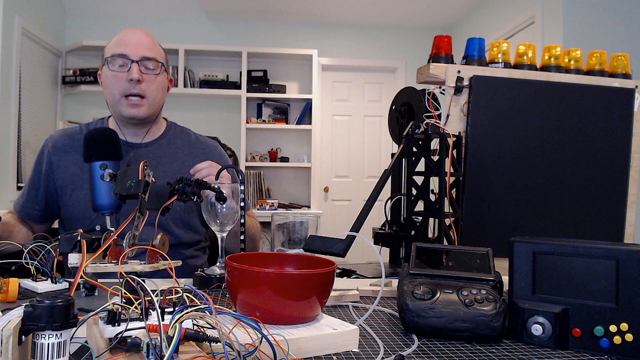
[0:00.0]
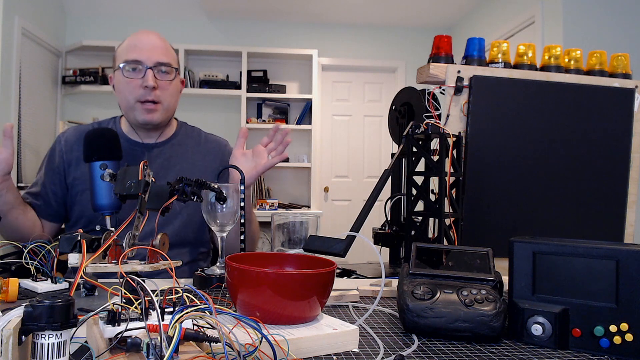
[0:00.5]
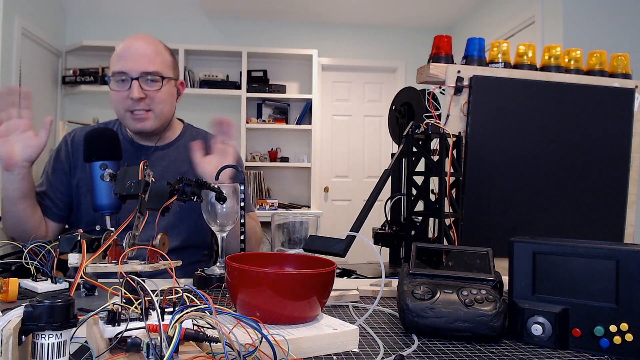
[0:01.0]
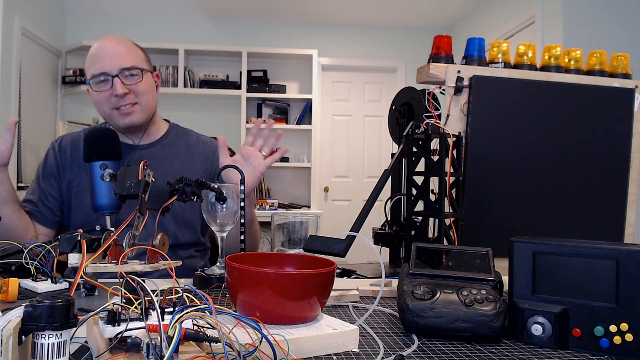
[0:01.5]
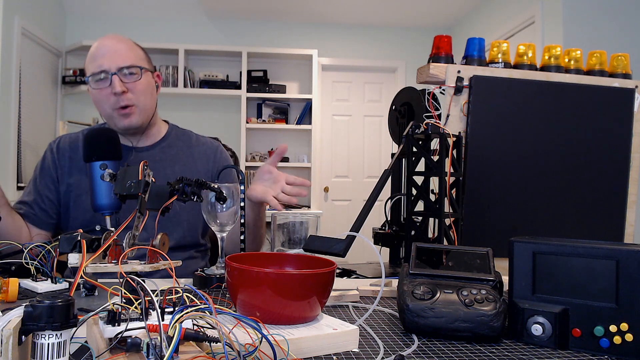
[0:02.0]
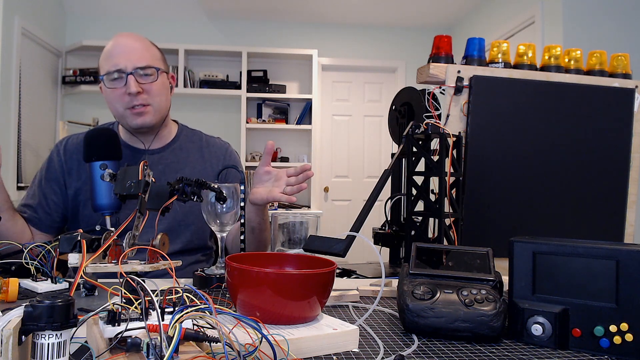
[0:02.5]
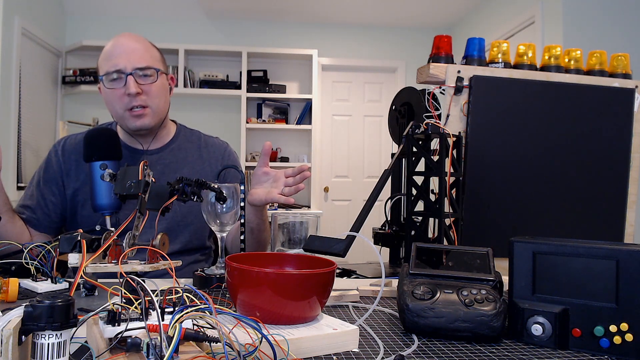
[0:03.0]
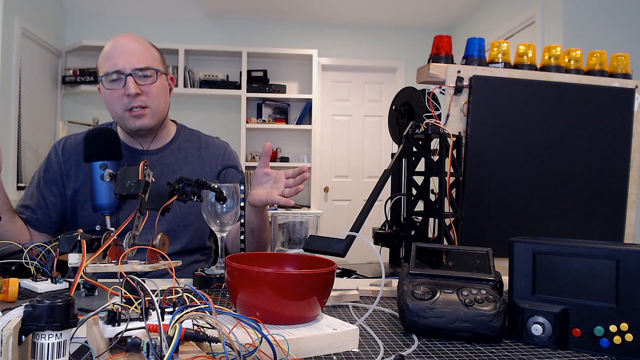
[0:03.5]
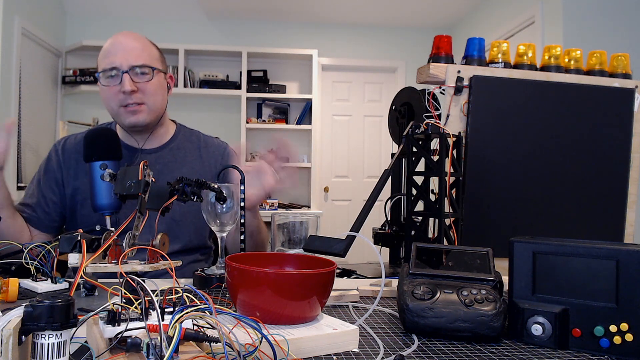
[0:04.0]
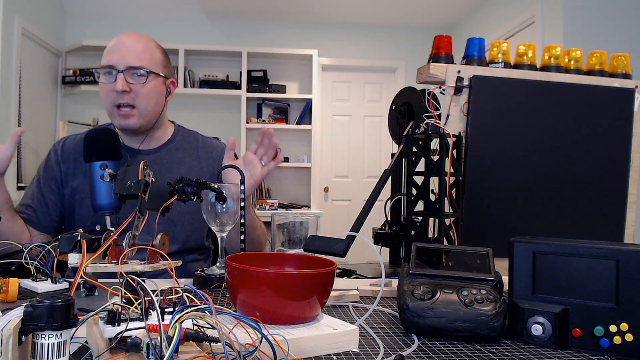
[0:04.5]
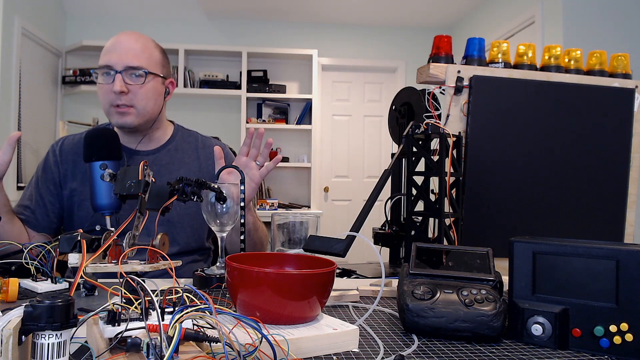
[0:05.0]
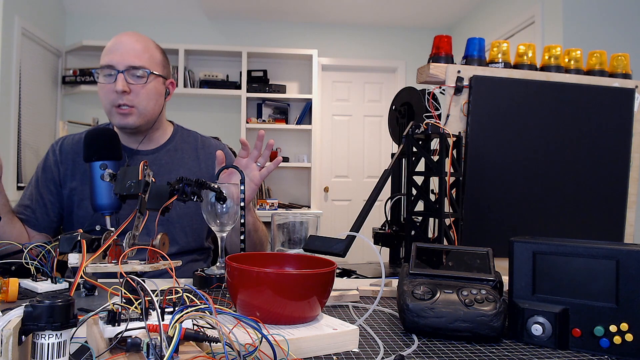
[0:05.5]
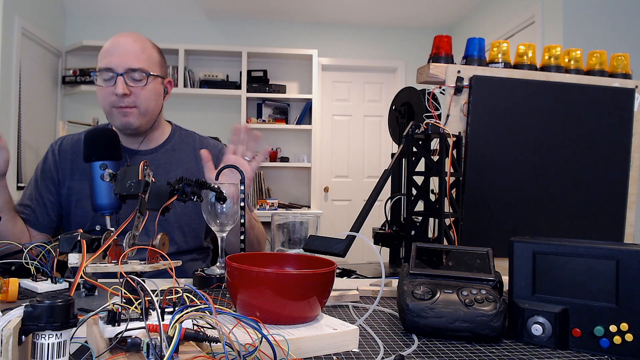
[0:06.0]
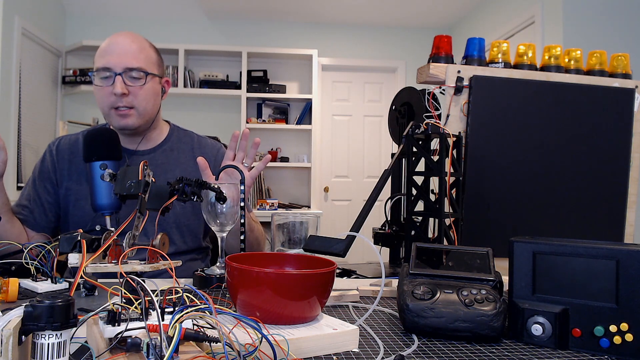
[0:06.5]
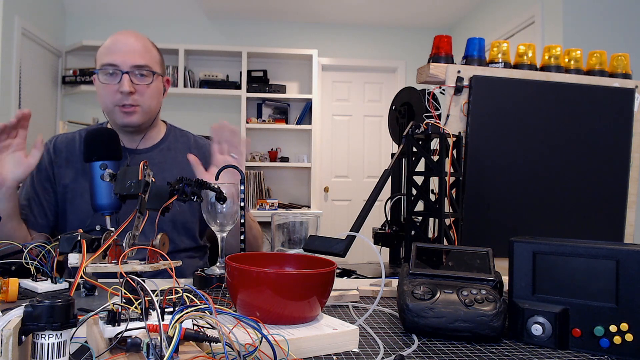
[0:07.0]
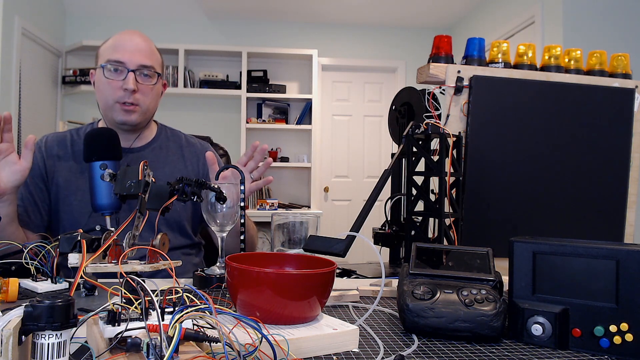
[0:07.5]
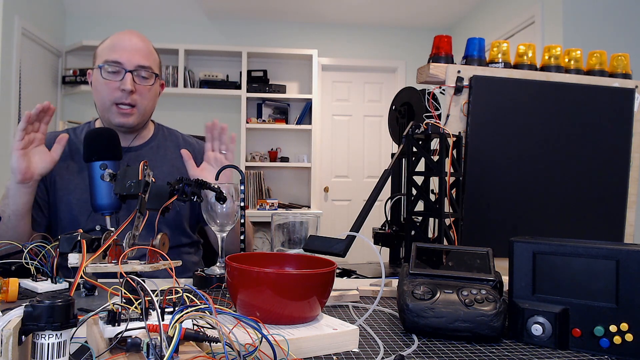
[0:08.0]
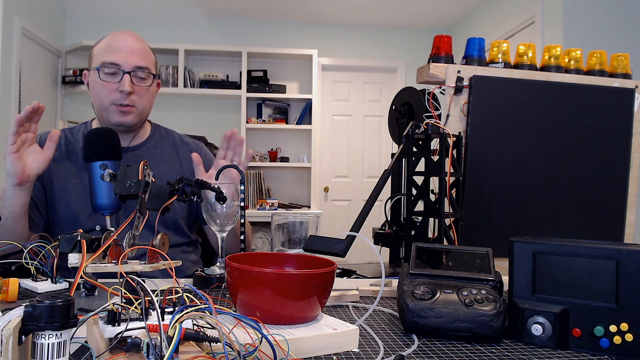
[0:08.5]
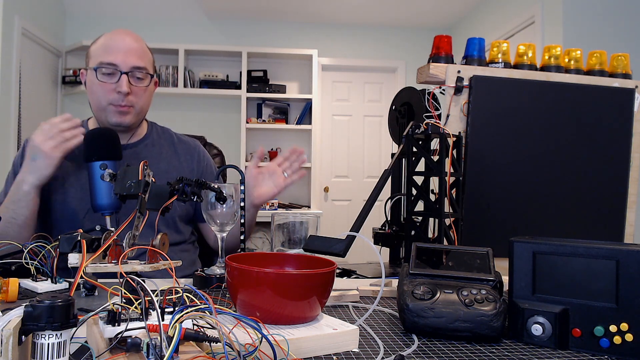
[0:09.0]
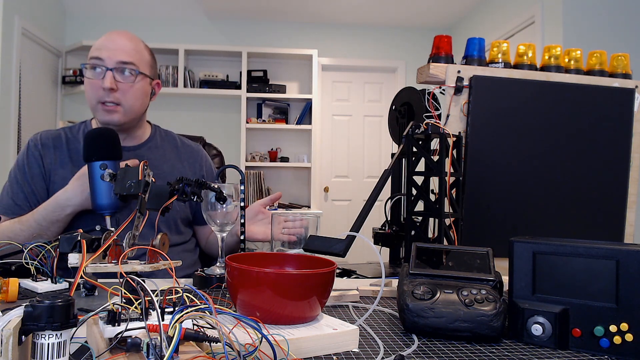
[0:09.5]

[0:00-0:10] A bald-headed man with a little bit of hair growing in the back is in what looks like a home office. On top of his computer monitor is a whole bunch of lights that look like they could flash: one red and one blue, like miniature versions of the lights on a police car, plus six yellow ones. He is probably doing a podcast or something. In front of him are a lot of wires, a microphone, a wine glass, another glass, what looks like a Nintendo controller with a phone hooked to it, another monitor, and a red bowl. In the background are a door and bookcases with lots of junk on them. He is just talking and not visibly doing anything else.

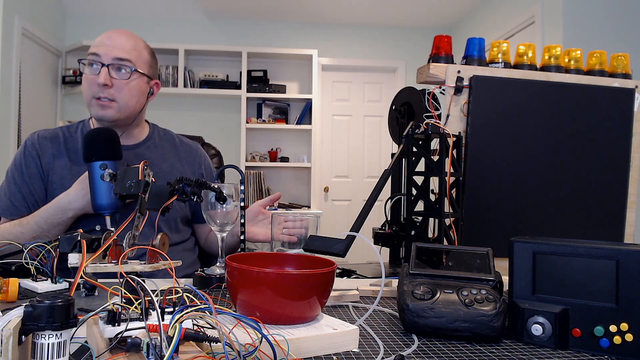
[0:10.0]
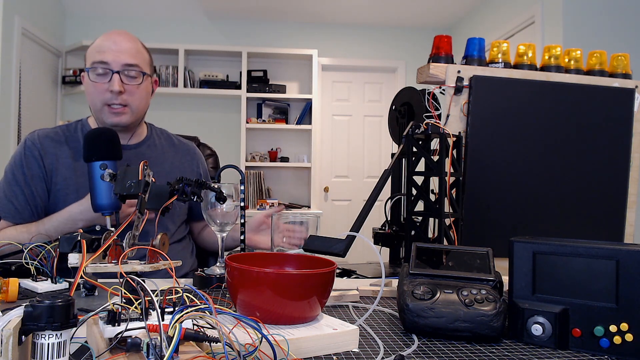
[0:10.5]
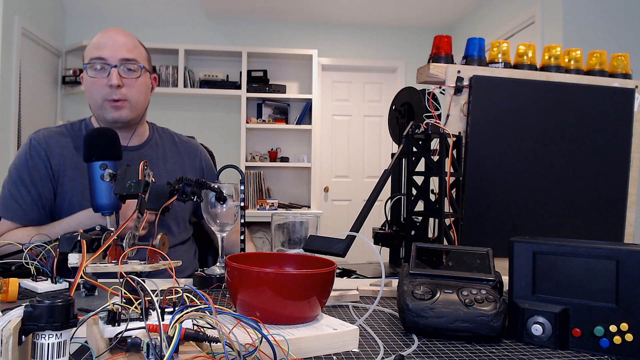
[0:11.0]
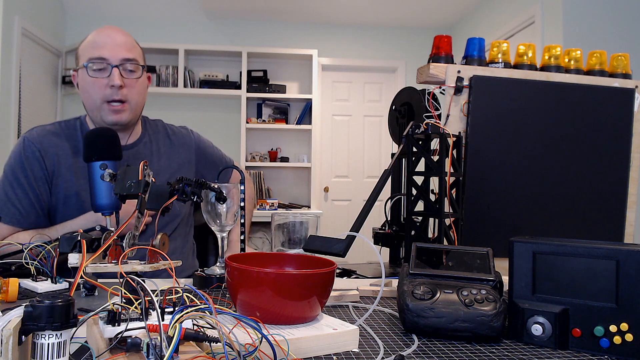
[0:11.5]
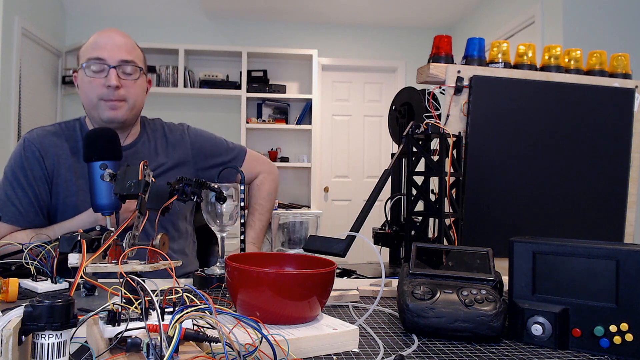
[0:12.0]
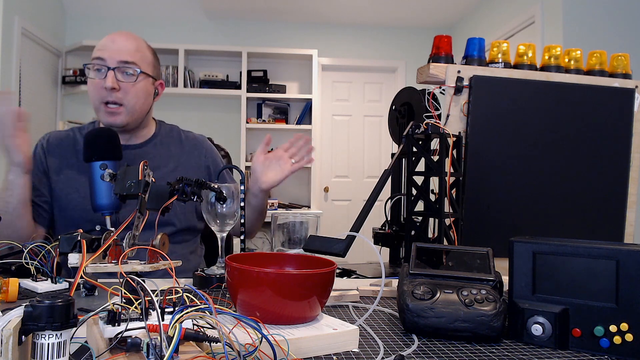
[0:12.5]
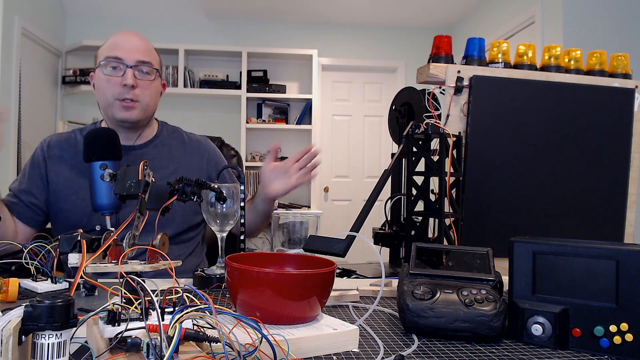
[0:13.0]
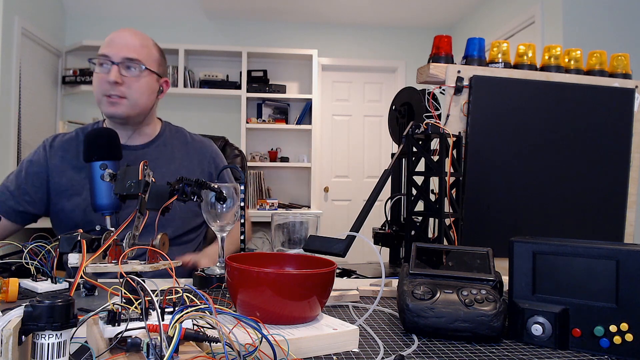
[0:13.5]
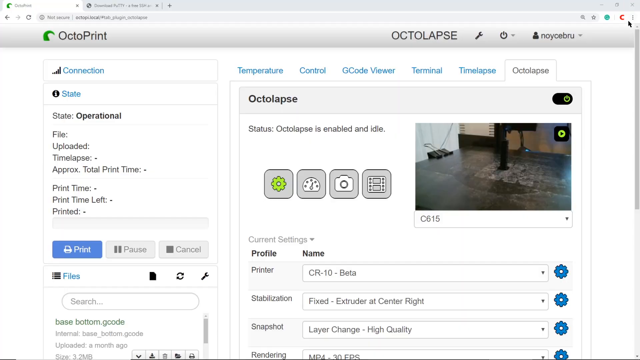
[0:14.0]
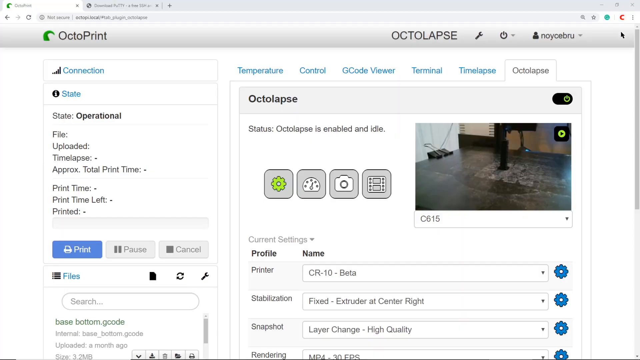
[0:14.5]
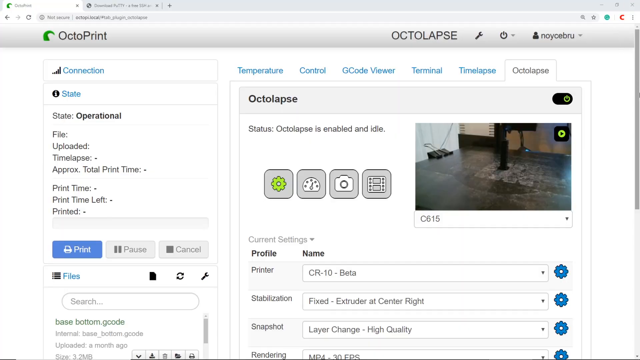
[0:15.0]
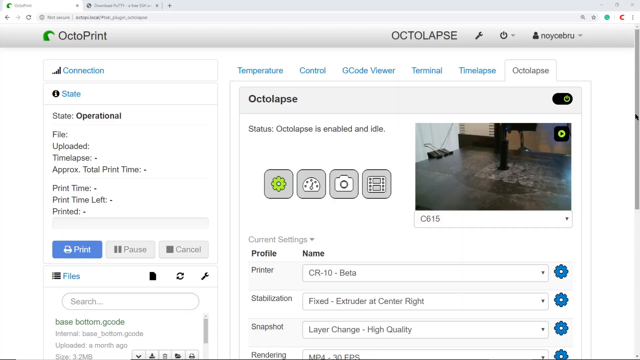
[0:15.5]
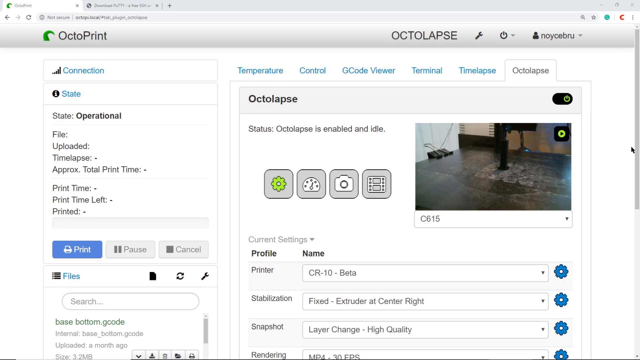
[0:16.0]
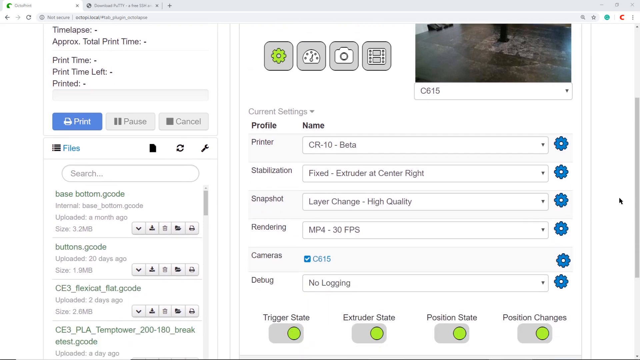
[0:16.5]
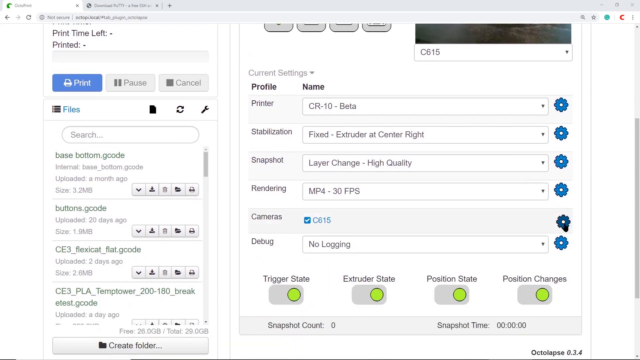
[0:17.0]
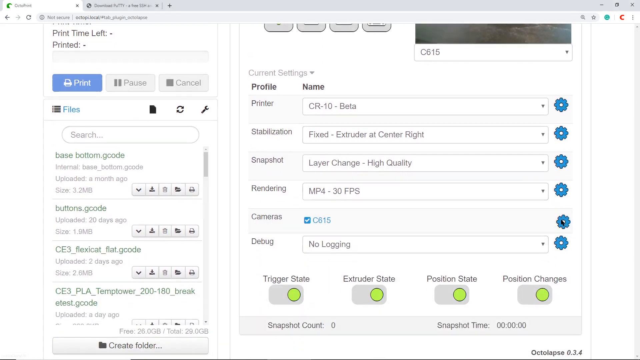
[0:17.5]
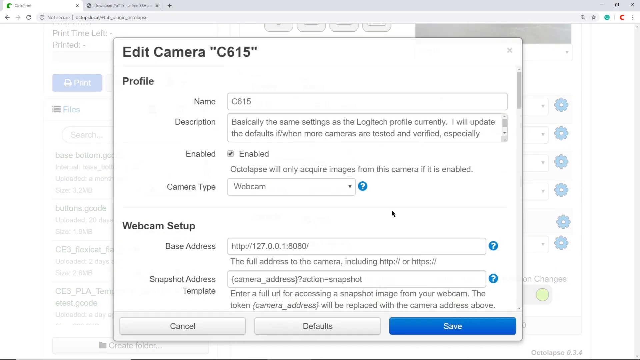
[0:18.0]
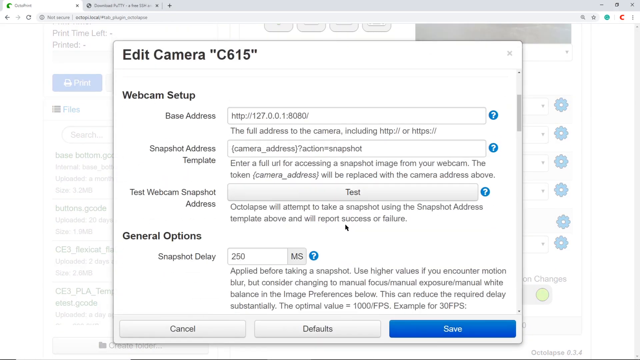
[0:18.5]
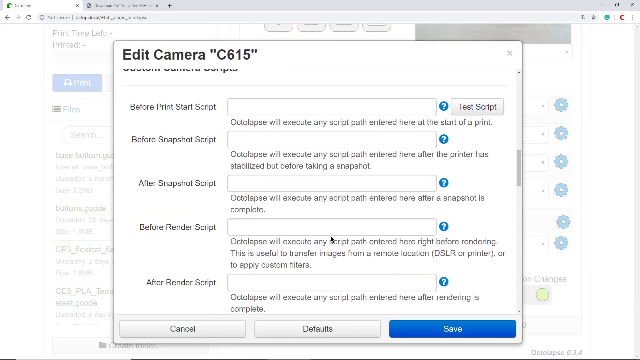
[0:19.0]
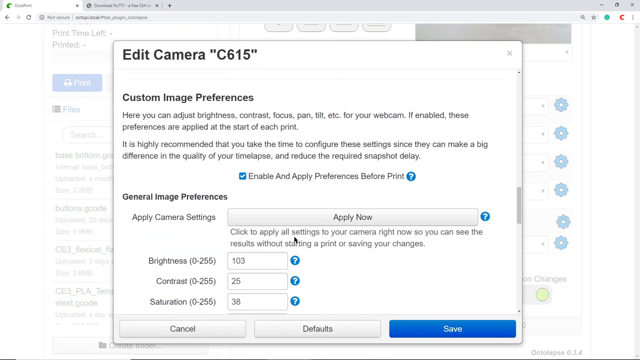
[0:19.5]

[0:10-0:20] A bald-headed man with a little bit of very short-cut hair in the back appears to be doing some type of podcast. He is in what is like a home office, with a lot of what look like small police lights on top of his computer. He then goes to a website called Octolapse; the screen also says "Octoprint" and shows the username Noisebru. It looks like an enabled program, and he is sending something to the printer "CR-10 beta"; the screen says "stabilization fixed extruder at center right".